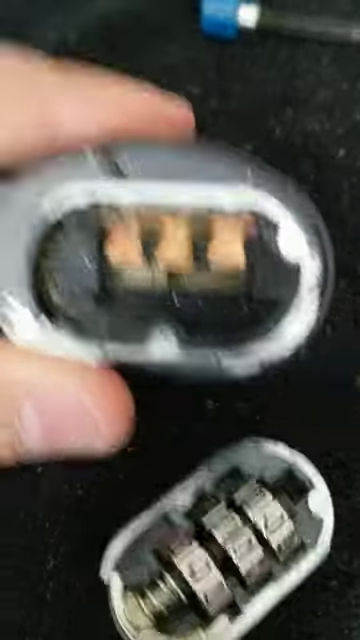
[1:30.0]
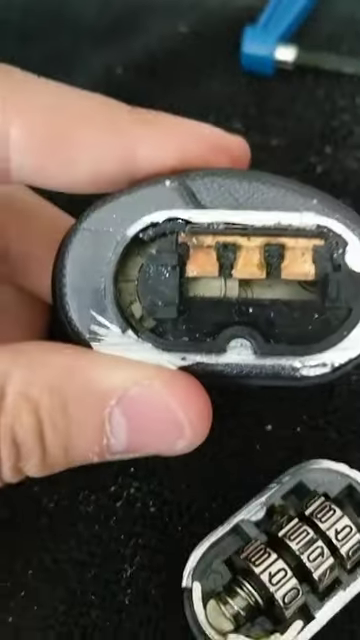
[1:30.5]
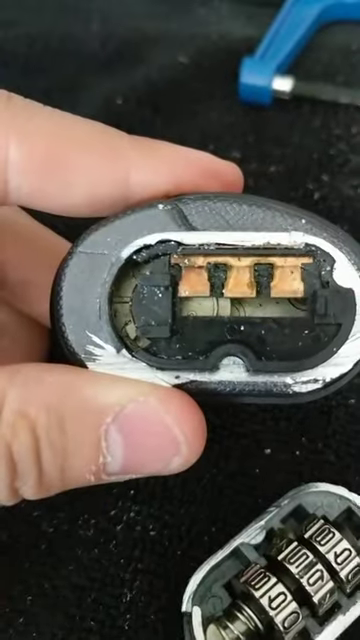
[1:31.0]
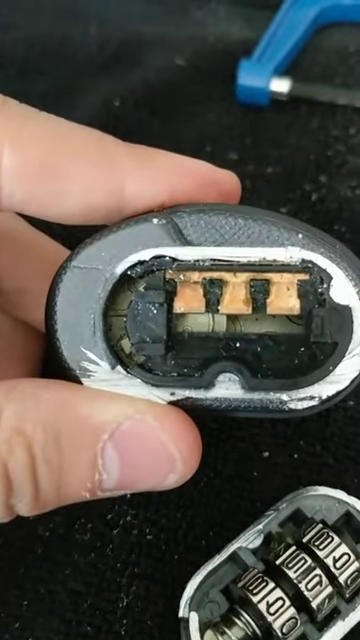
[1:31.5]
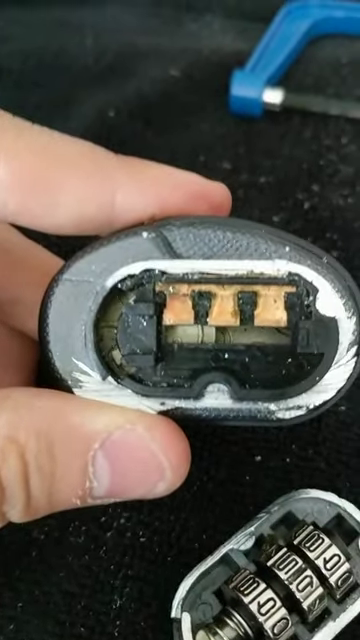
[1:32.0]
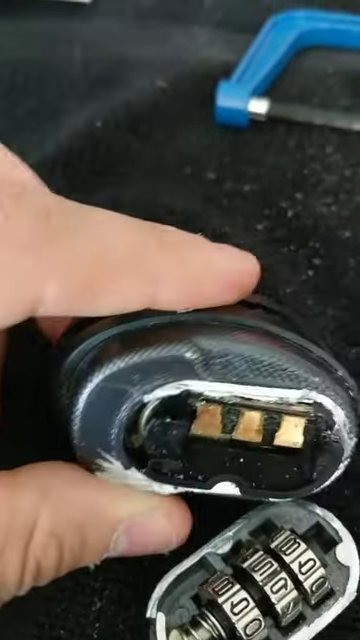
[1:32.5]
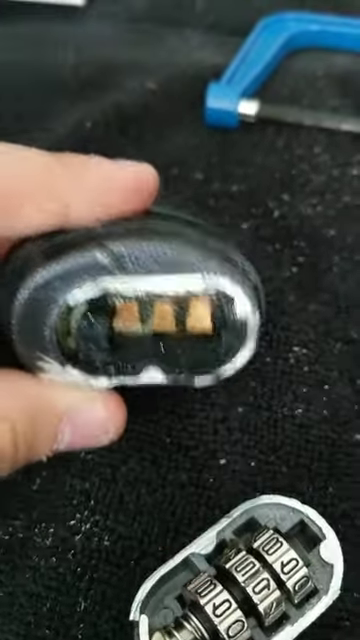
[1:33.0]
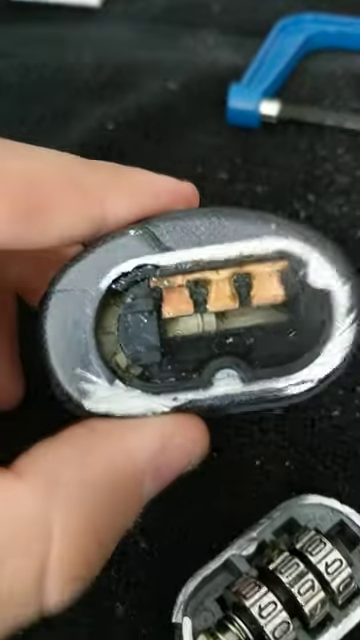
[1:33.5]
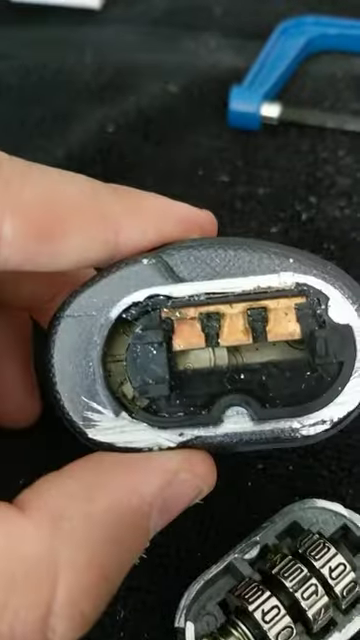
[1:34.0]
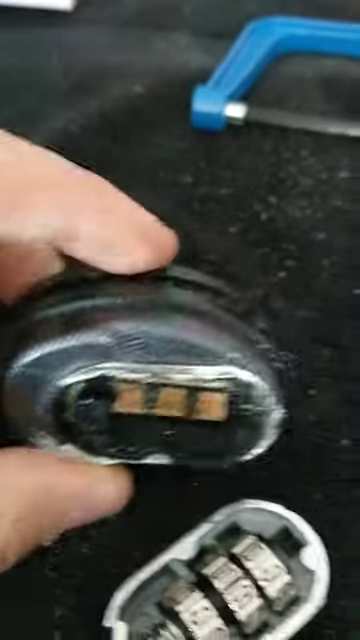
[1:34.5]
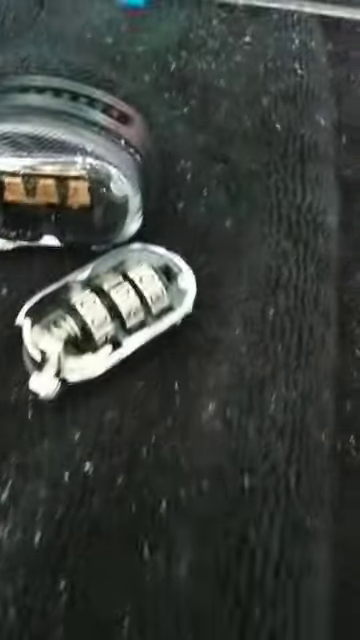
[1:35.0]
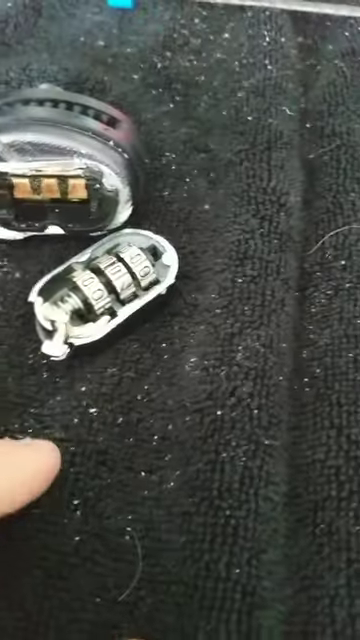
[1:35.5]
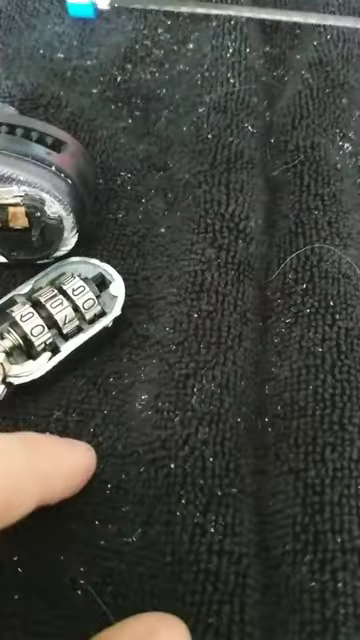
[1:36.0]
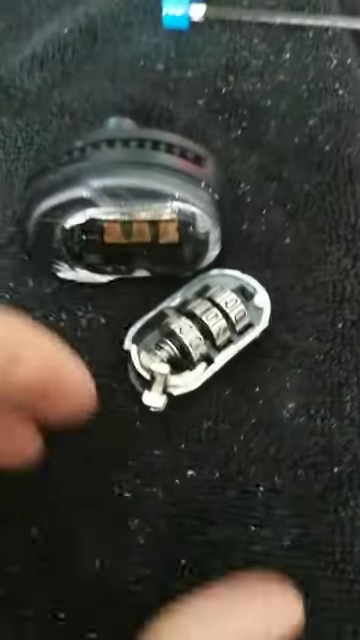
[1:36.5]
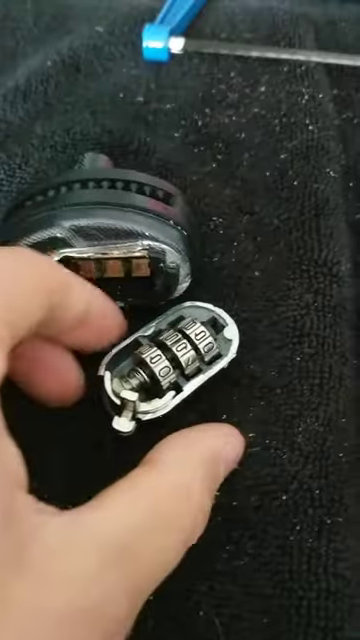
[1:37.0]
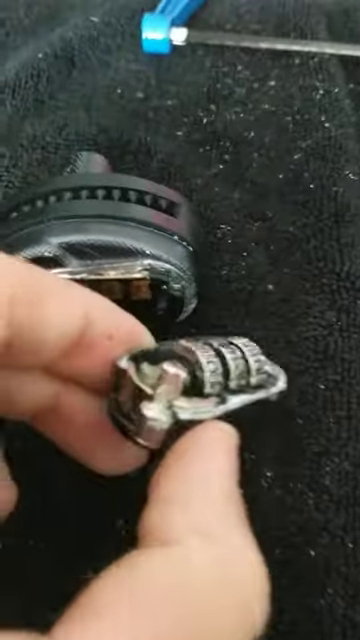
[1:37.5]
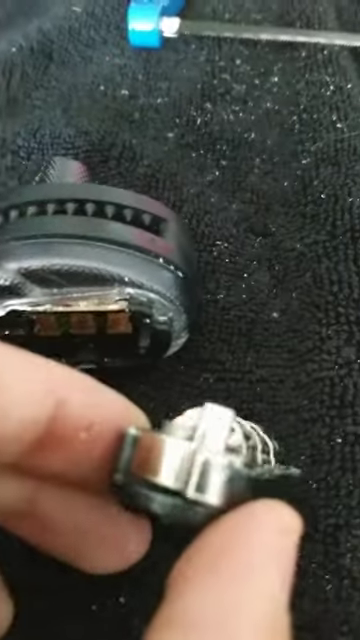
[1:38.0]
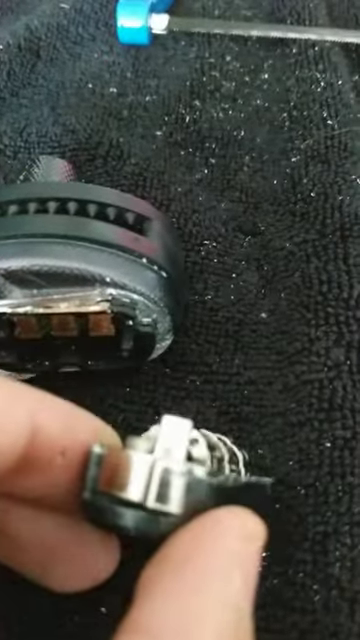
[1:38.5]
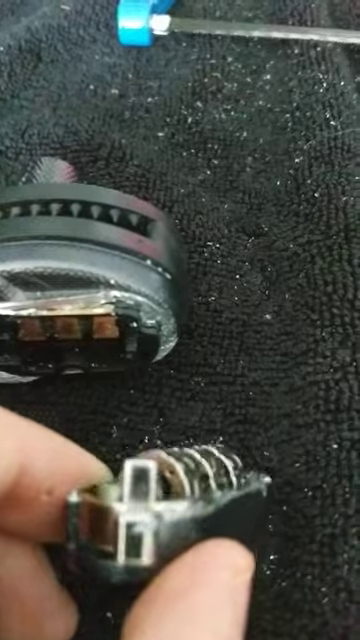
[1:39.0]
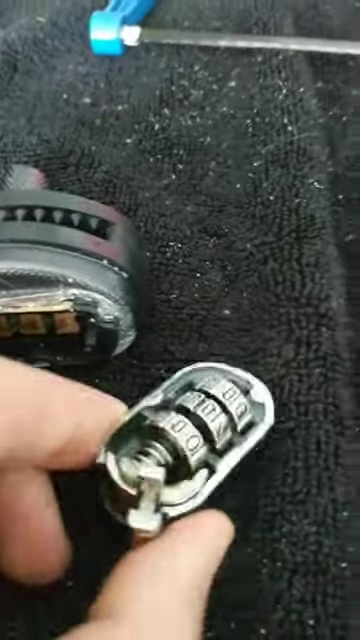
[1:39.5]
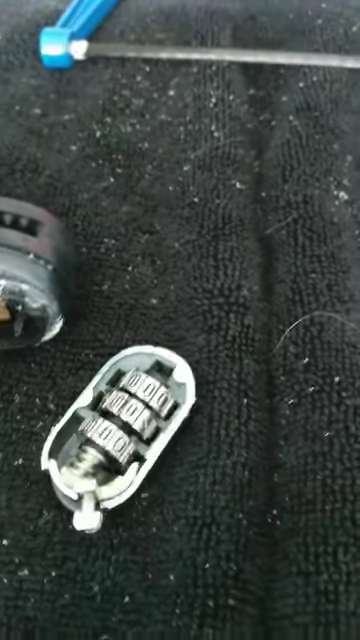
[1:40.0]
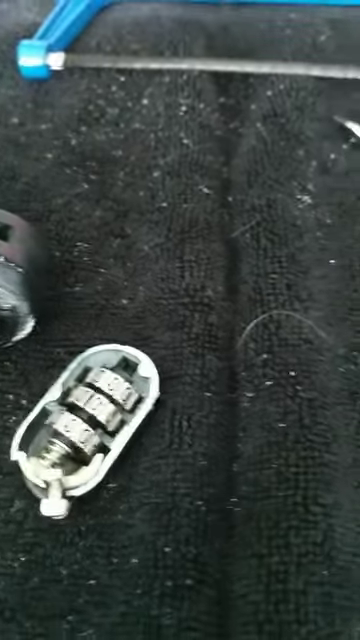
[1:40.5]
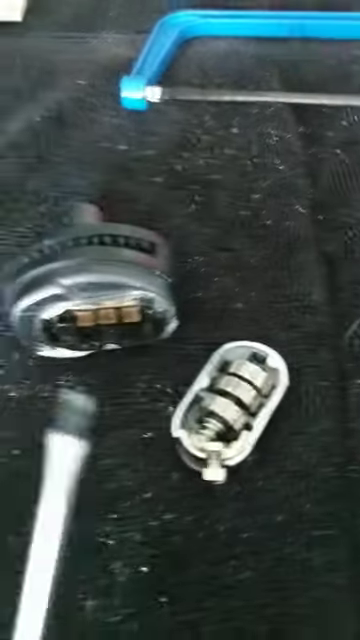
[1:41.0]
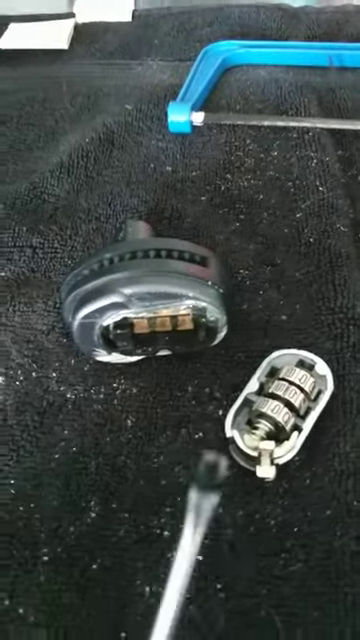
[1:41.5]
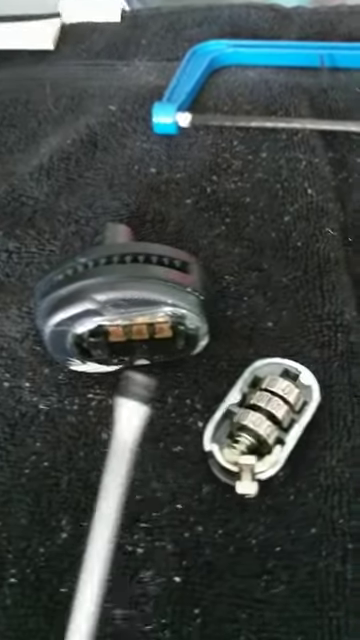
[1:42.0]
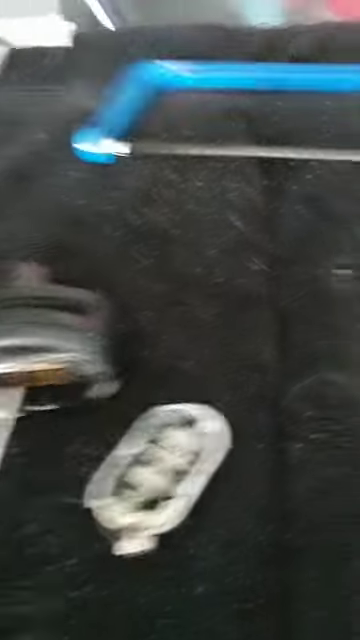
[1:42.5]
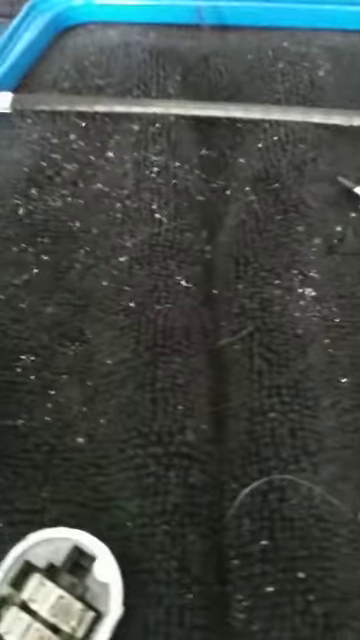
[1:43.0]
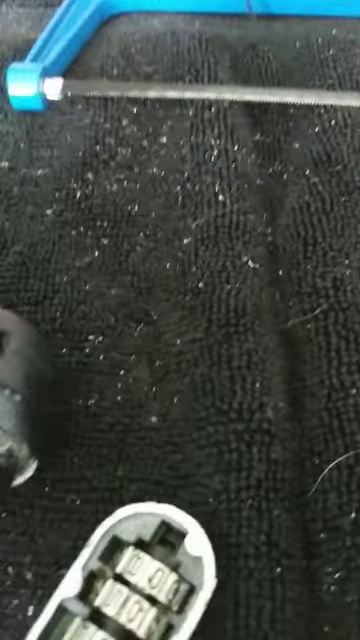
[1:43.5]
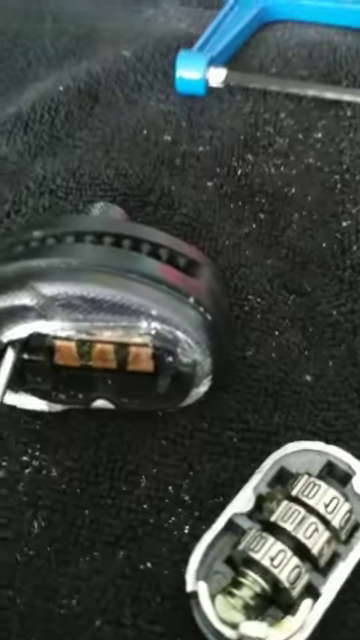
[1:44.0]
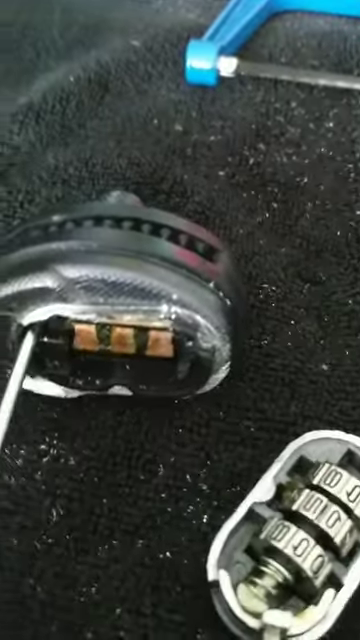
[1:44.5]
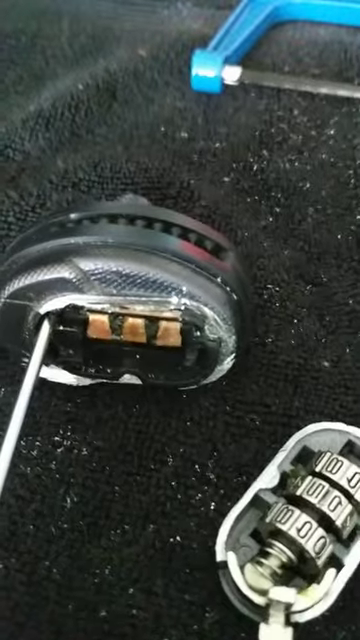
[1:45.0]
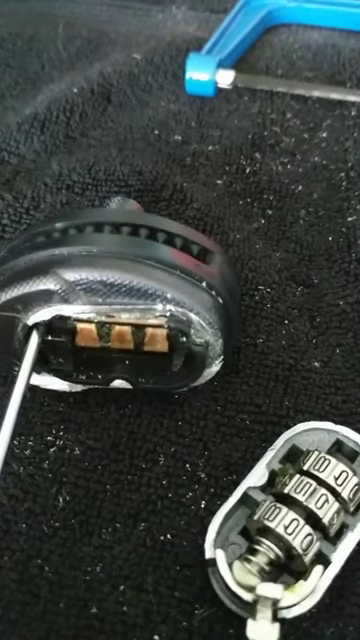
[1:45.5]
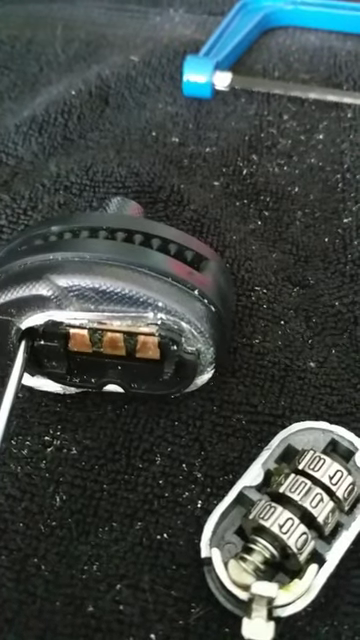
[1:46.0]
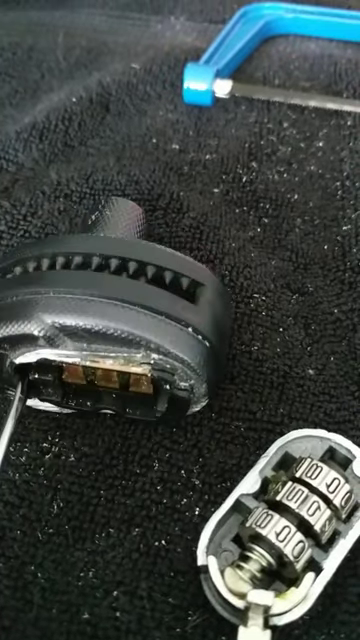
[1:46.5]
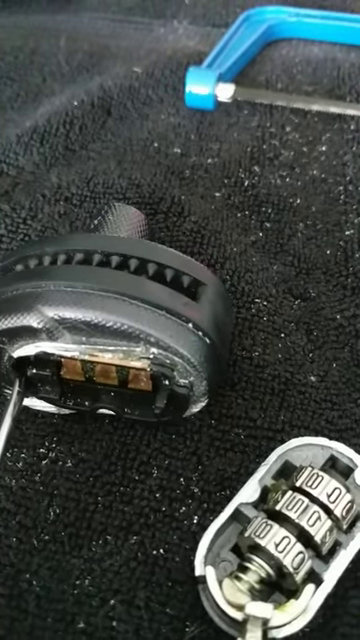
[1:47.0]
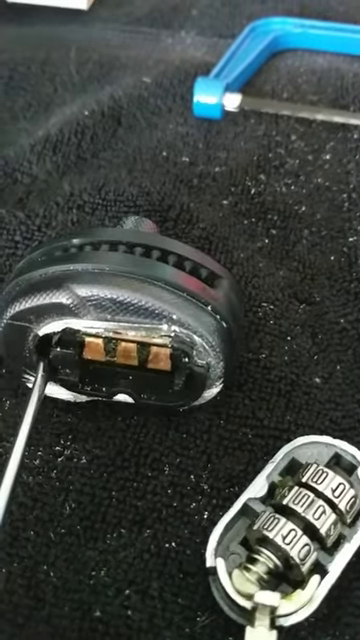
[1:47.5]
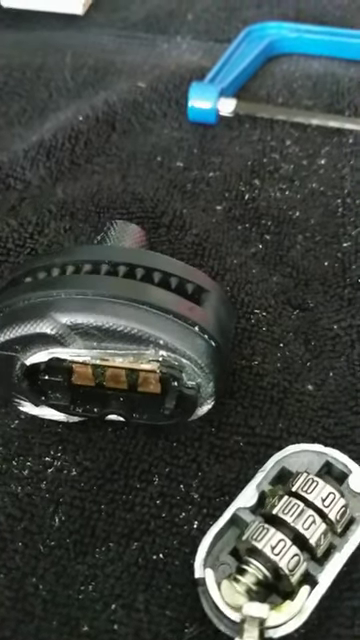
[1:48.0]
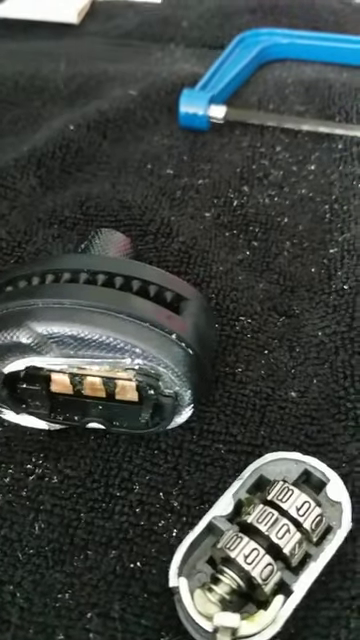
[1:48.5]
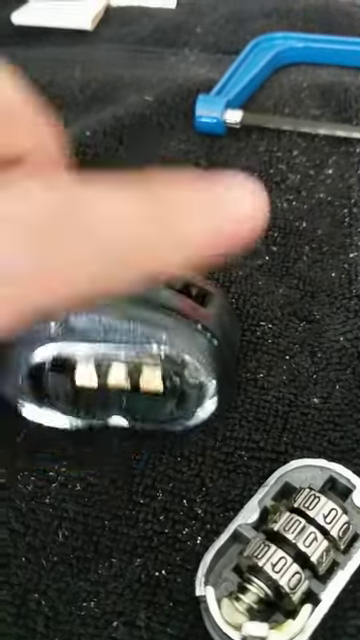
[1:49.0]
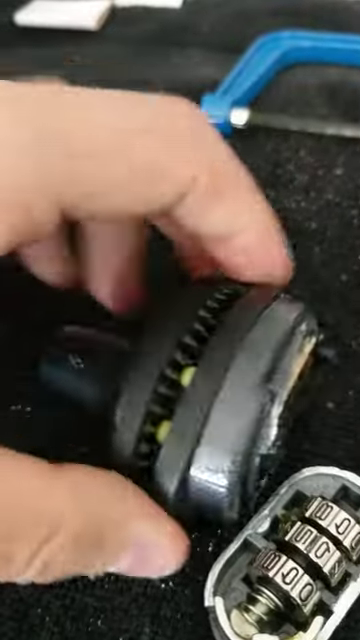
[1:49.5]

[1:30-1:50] A person holds the larger chunk of the damaged key lock, revealing the motherboard underneath. The underside of the larger chunk has a metal-like color, while its top has a black handle, and its inside has some yellow objects. Beside it is the metal-looking smaller chunk with a protruding metallic knob and three rows of numbering. The finger briefly grabs the smaller chunk and puts it back down on the black, uneven, rough-textured table. In the top right corner, the hacksaw with the blue handle is still on the black uneven background. The hand grabs a screwdriver and pushes it into an opening underneath the larger chunk, then places the screwdriver down and grabs the larger chunk once more.